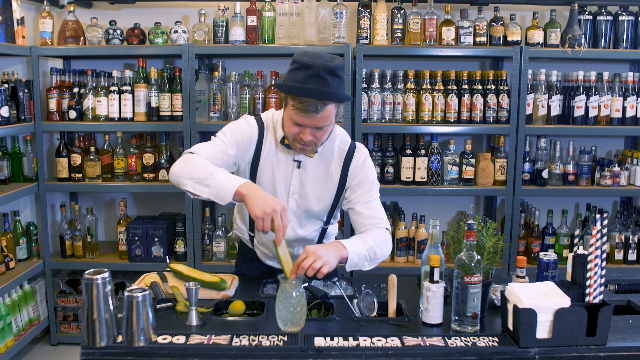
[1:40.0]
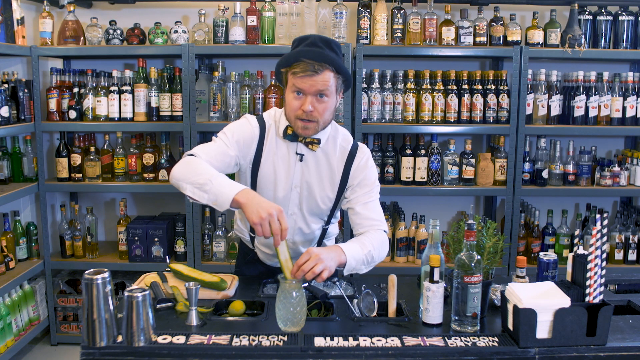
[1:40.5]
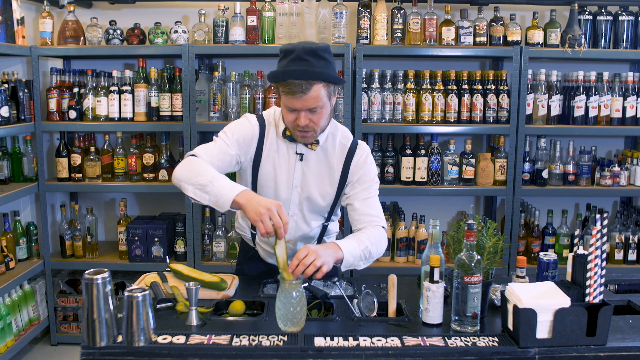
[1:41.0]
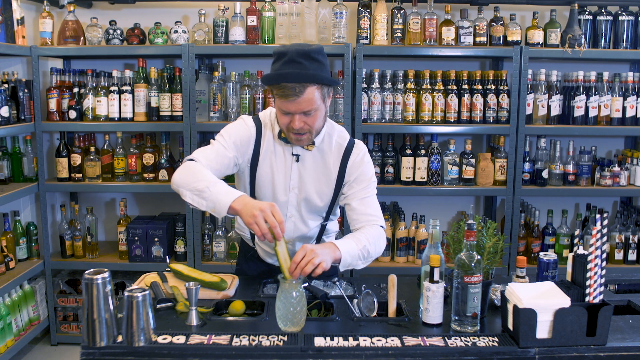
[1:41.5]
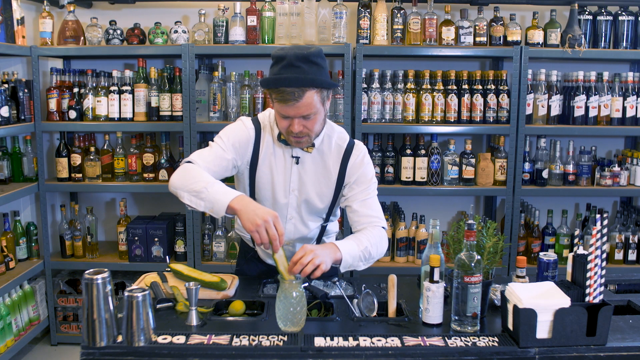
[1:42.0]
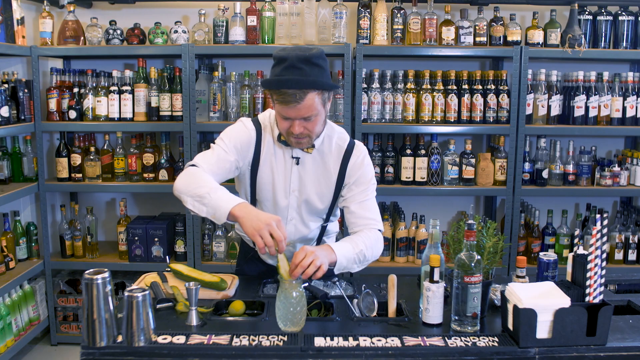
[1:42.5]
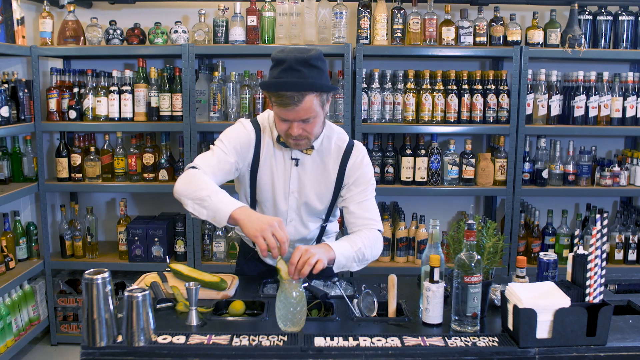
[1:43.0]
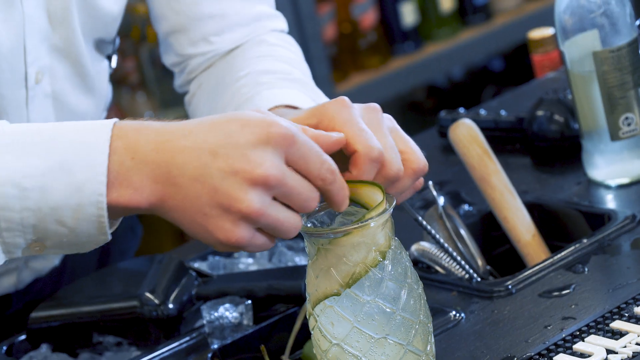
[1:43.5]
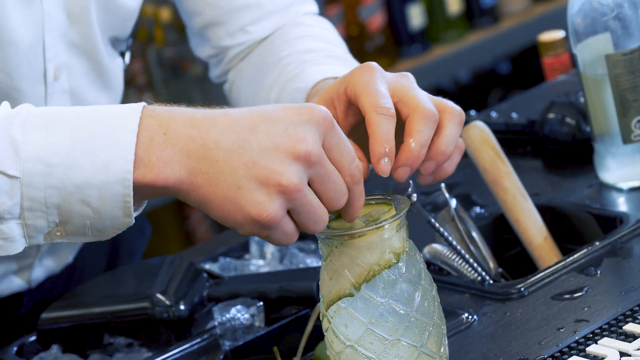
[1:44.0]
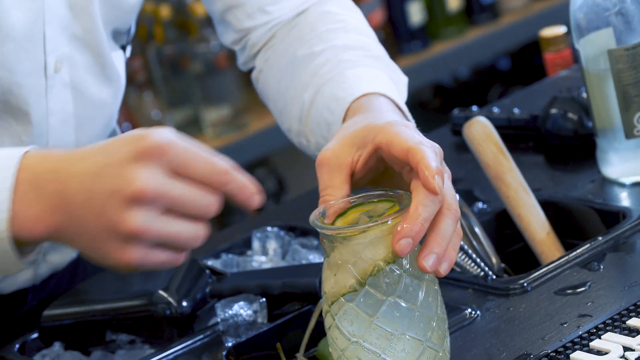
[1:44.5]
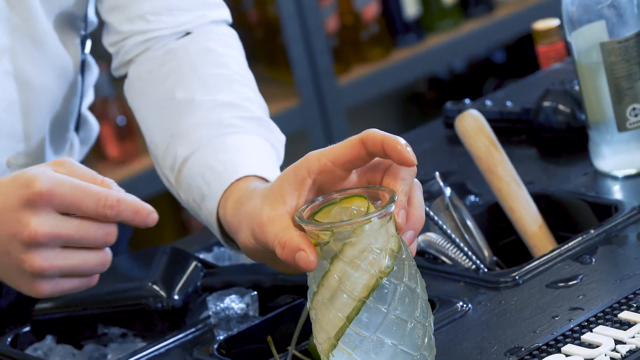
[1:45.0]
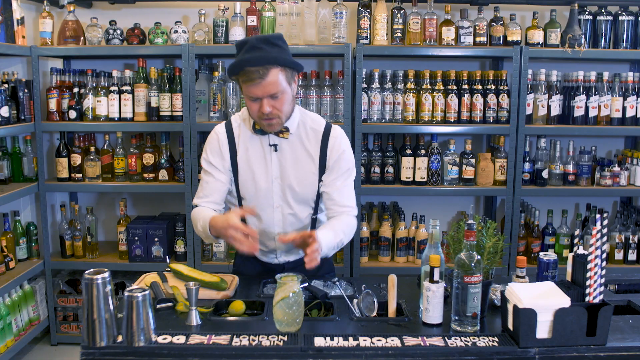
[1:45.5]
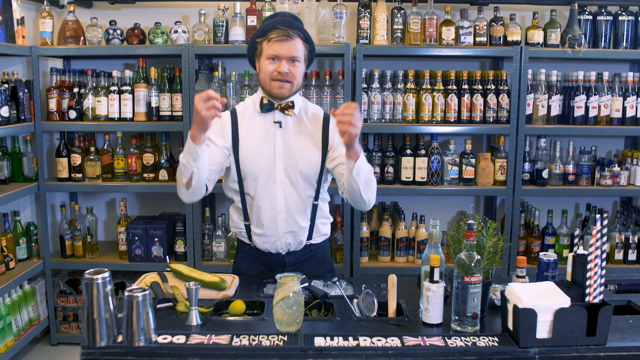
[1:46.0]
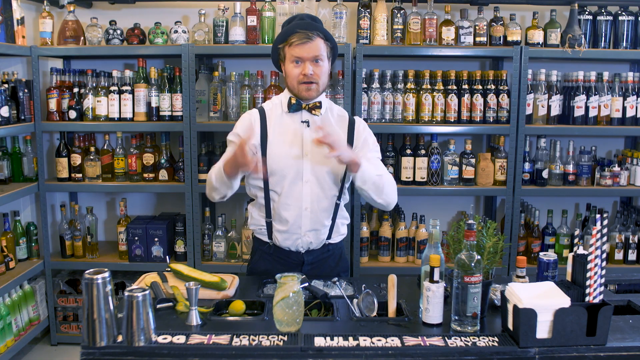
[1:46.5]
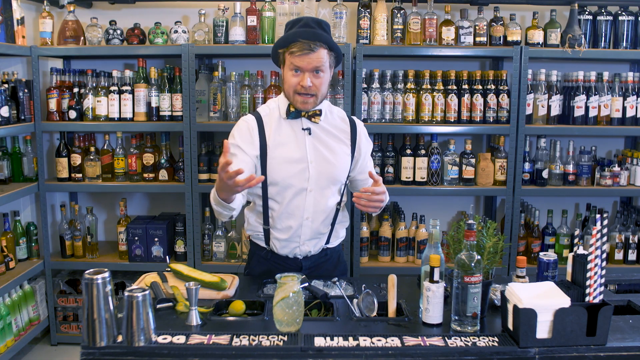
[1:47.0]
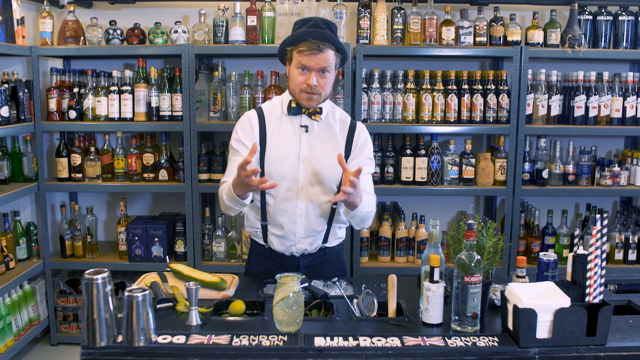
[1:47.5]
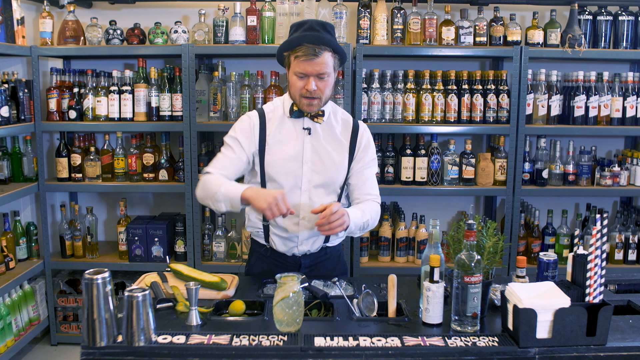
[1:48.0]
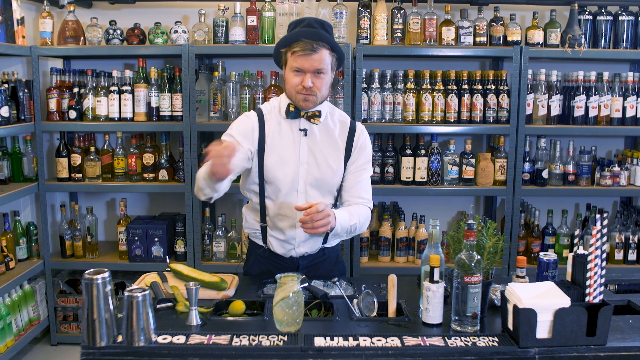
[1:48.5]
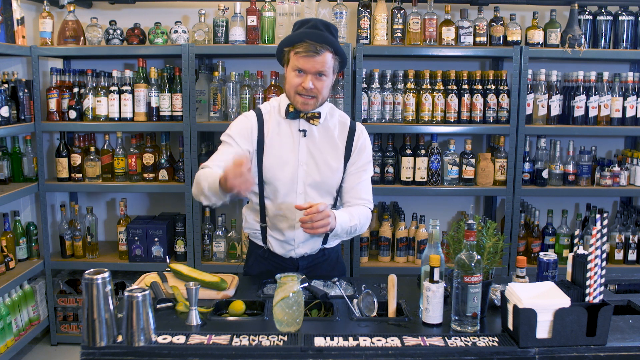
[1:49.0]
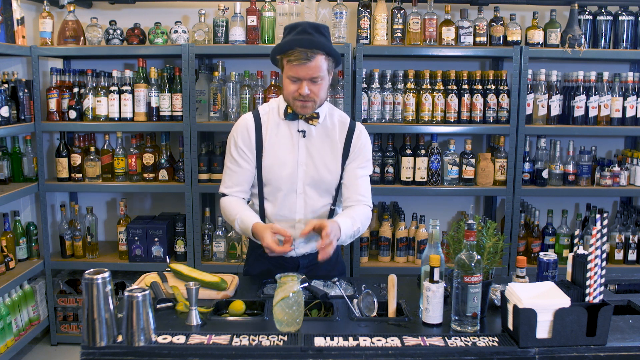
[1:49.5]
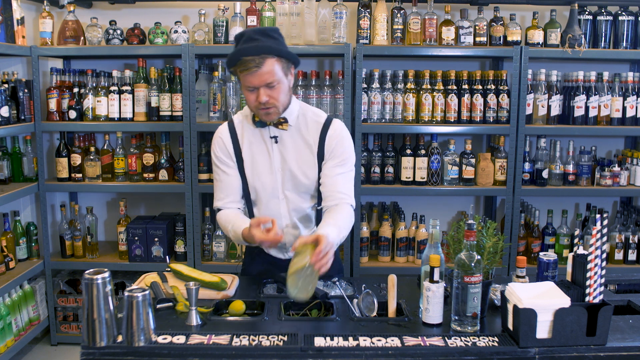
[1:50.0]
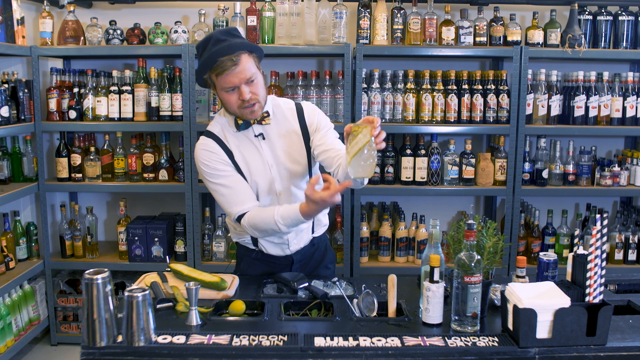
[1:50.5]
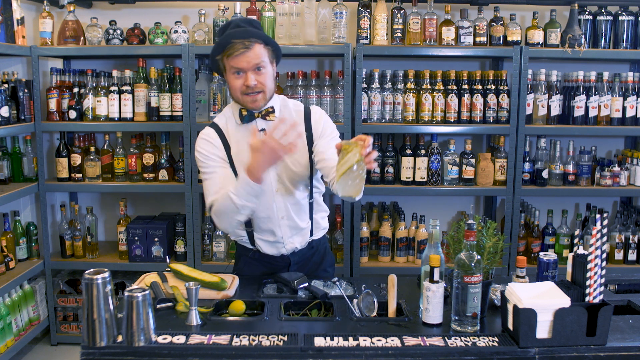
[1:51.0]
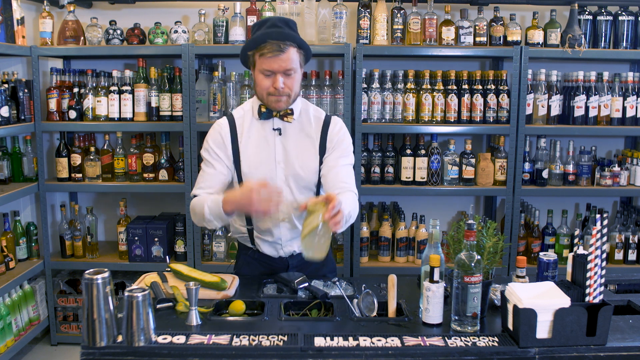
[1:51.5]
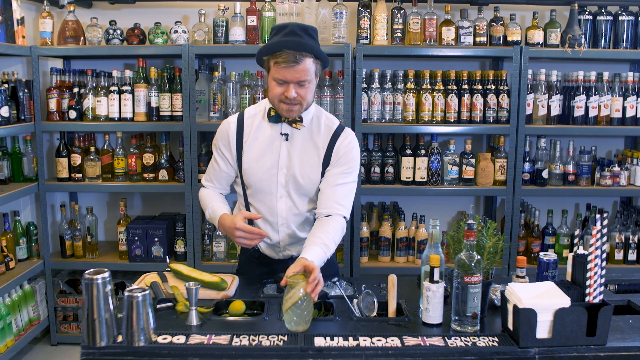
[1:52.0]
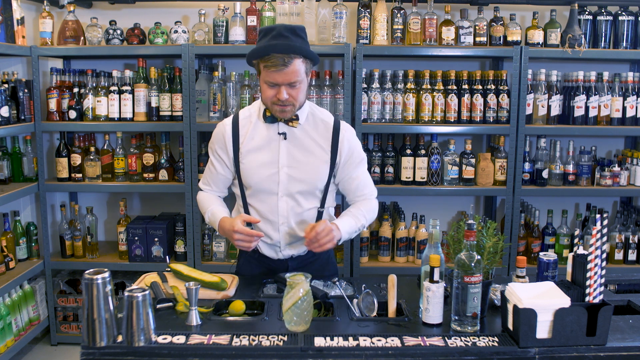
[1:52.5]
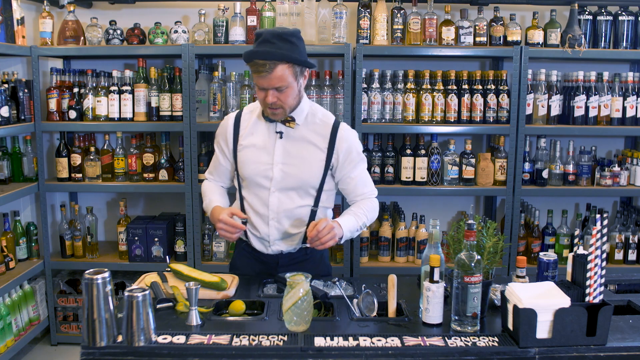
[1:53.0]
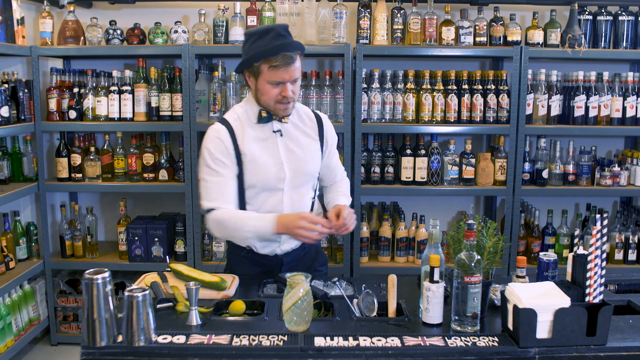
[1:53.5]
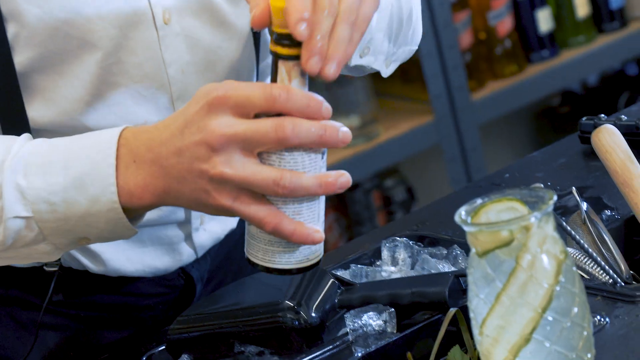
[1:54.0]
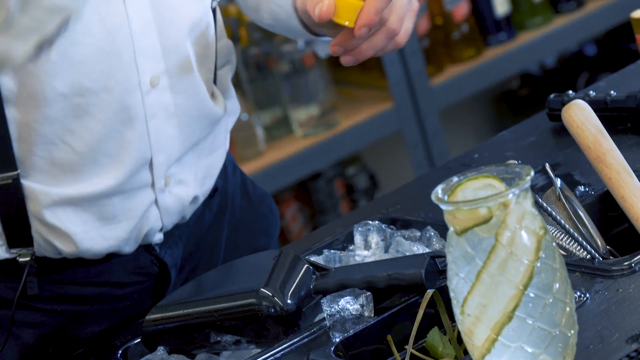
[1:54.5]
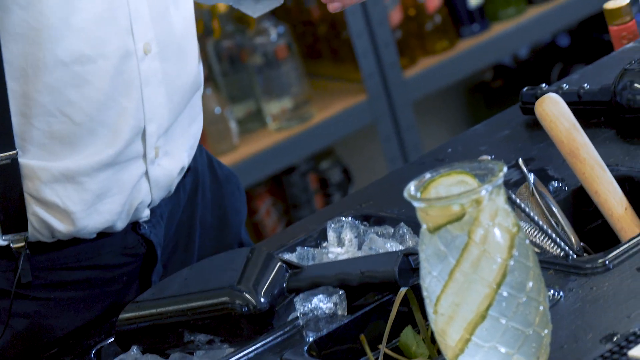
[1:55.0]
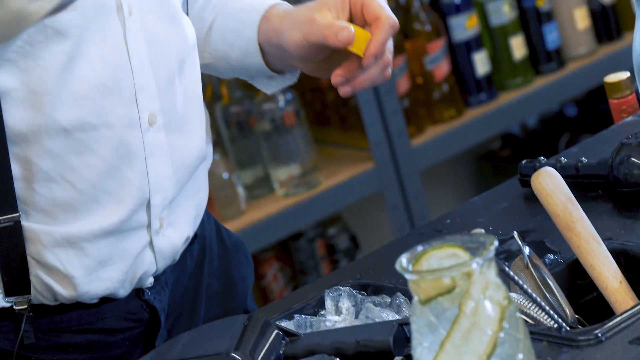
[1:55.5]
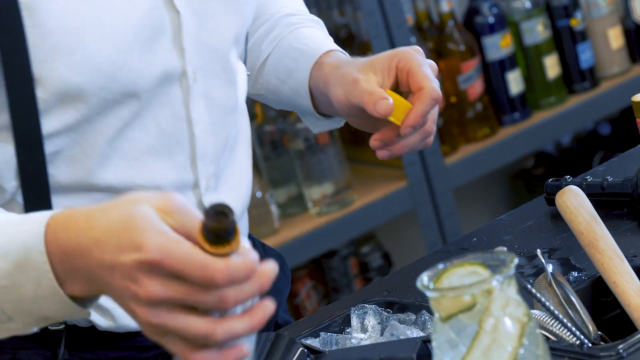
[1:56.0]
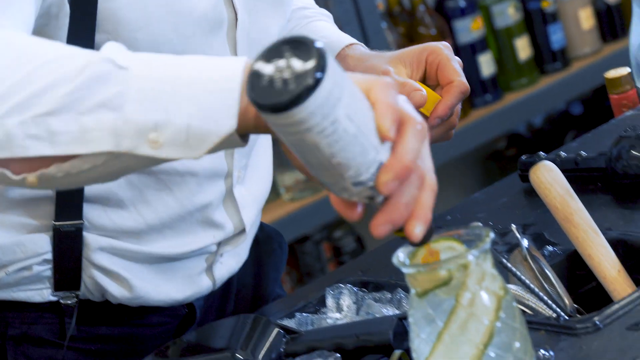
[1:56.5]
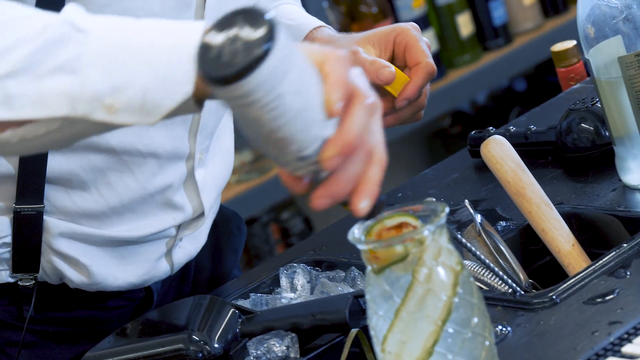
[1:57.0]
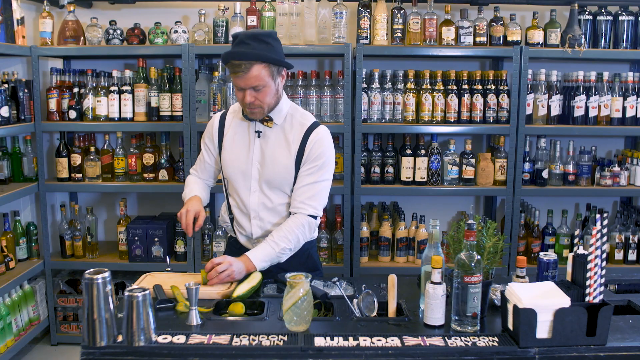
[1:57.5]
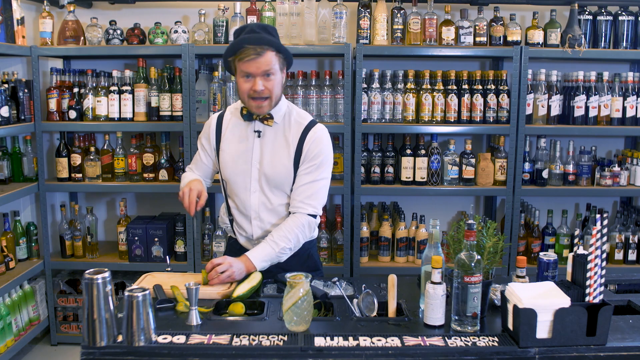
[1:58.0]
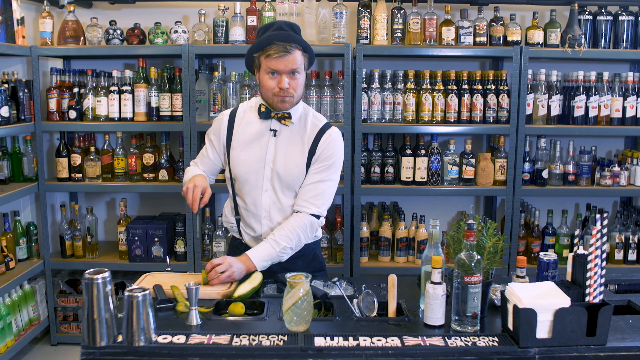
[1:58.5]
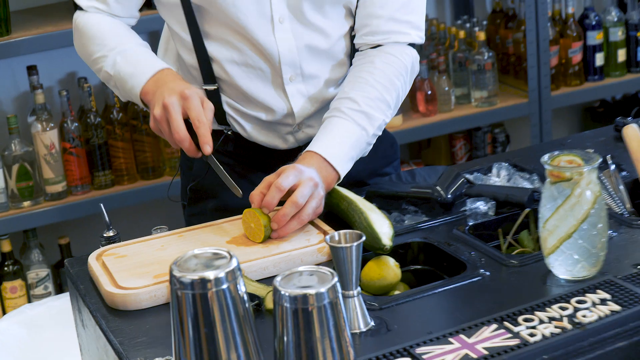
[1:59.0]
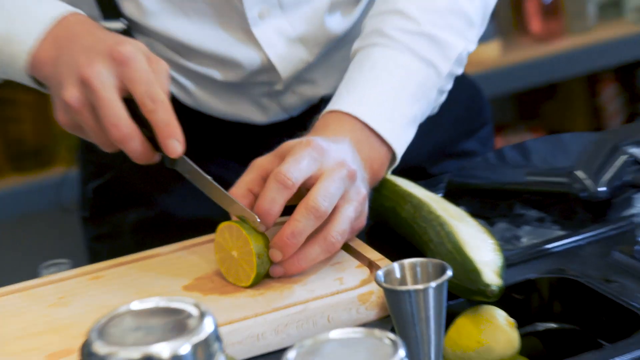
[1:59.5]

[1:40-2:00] Rasmus carefully places the sliced cucumber inside the cup, wrapping it around the cup in a spiral, and briefly lifts the glass cup to show how the cucumber was placed. He grabs the Angostura bitters bottle, which has a yellow cap, opens the lid, and holding it in one hand pours its contents into the pineapple-shaped glass cup. He then cuts more of the lime, the other half still on the chopping board, holding it with one hand and the knife with the other as he gently cuts a thin slice. In the background, various alcohol bottles are stacked on a dark blue shelf. On the topmost part of the shelf are skull-shaped bottles in various colors: one green, one dark red, one black mixed with gray, and one white.